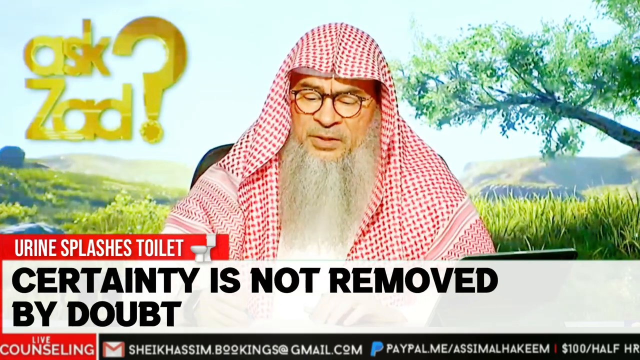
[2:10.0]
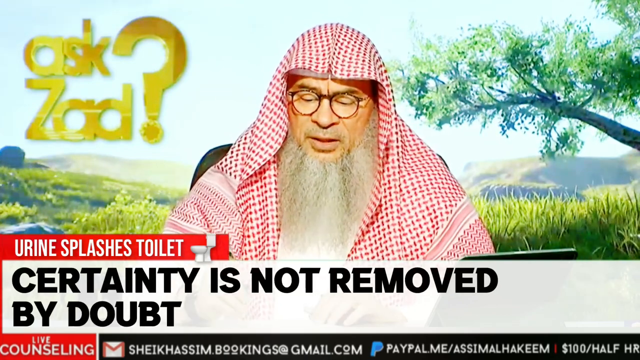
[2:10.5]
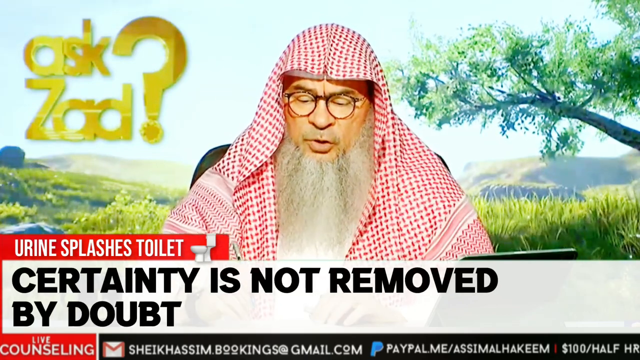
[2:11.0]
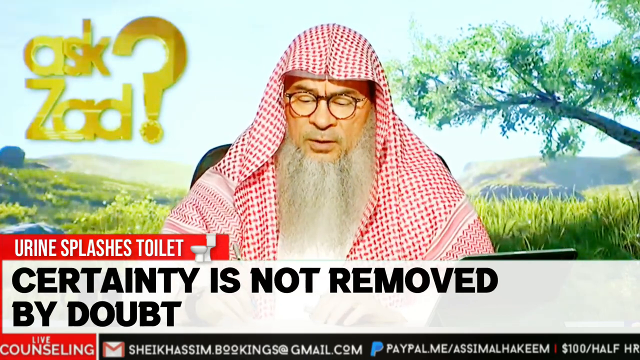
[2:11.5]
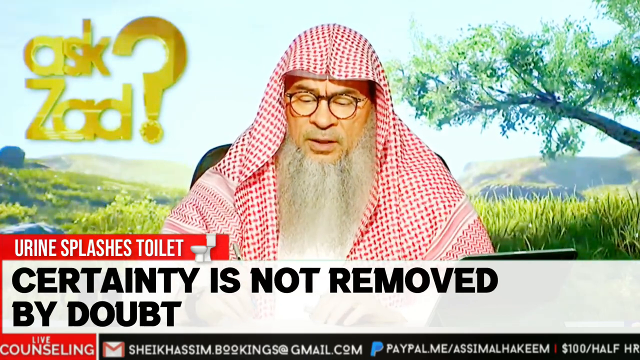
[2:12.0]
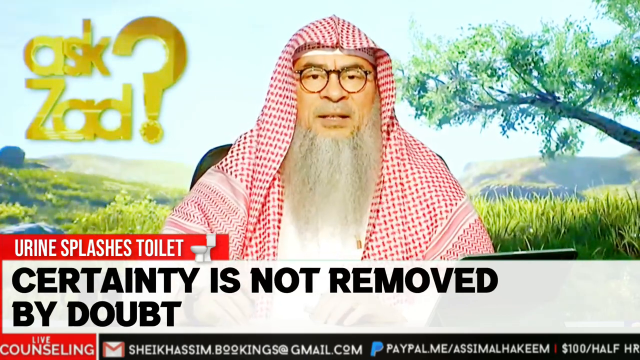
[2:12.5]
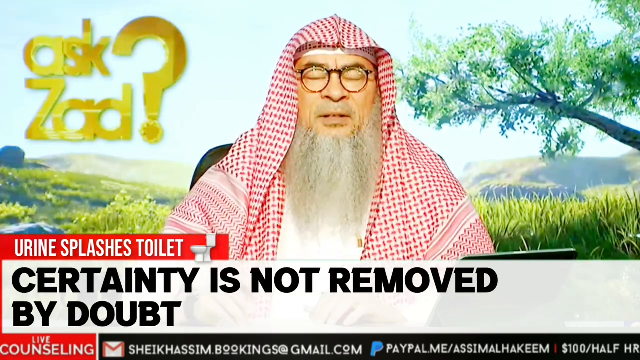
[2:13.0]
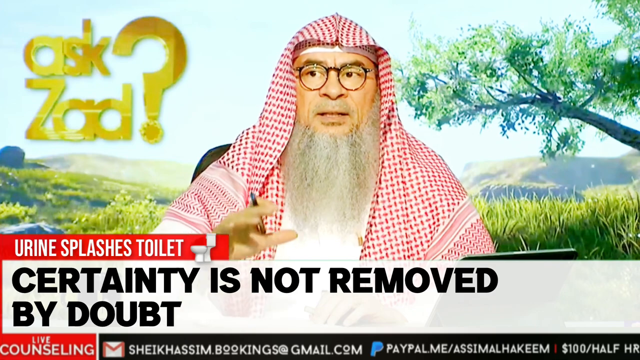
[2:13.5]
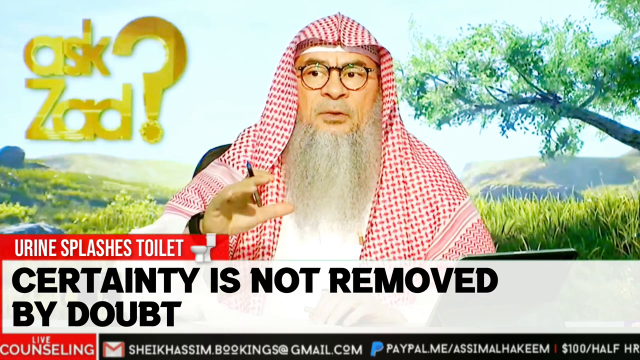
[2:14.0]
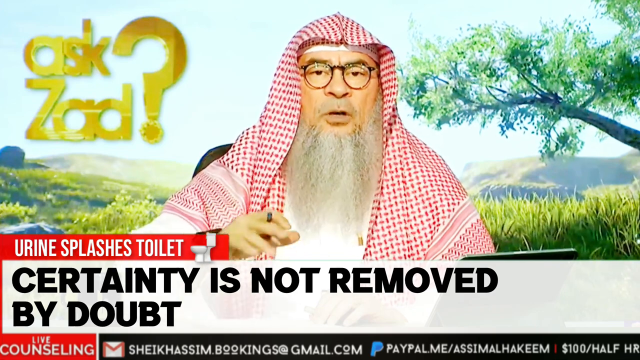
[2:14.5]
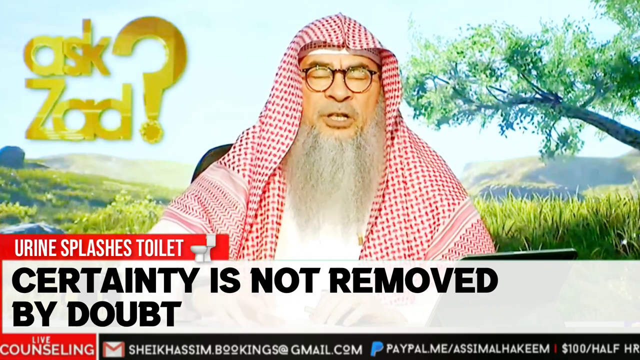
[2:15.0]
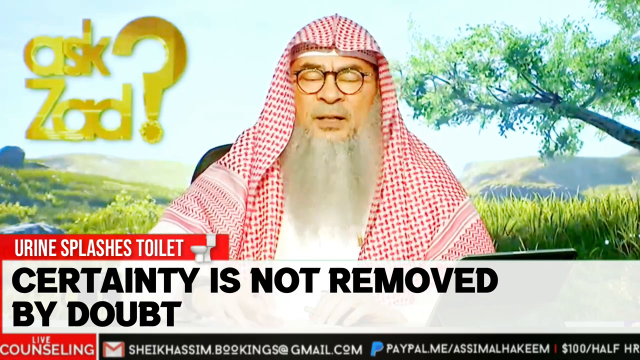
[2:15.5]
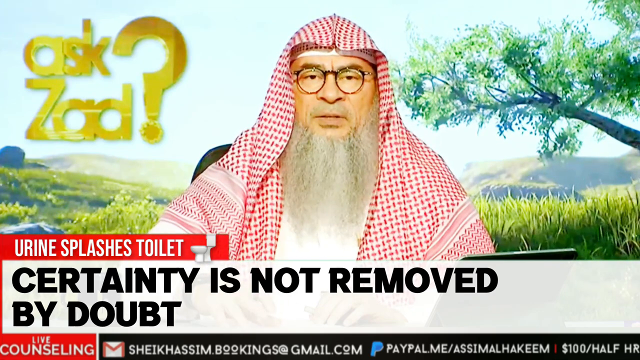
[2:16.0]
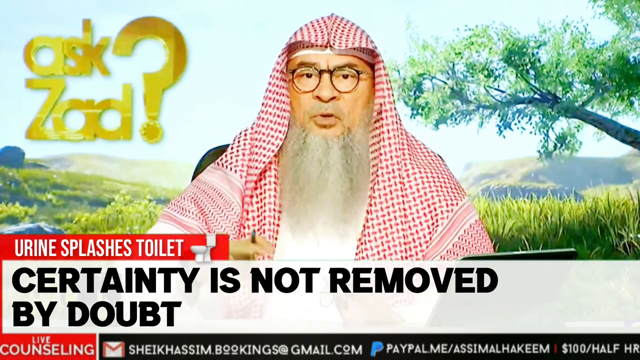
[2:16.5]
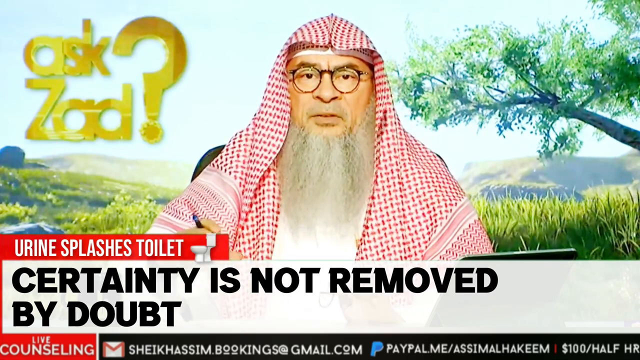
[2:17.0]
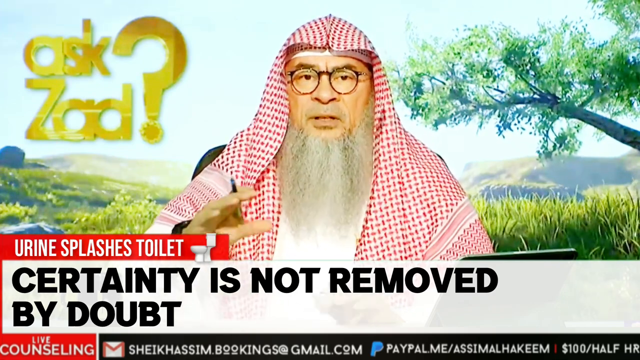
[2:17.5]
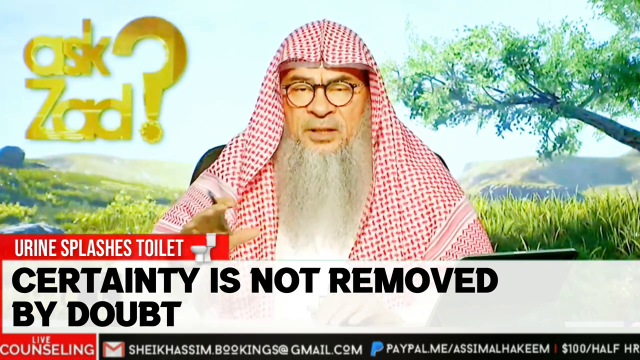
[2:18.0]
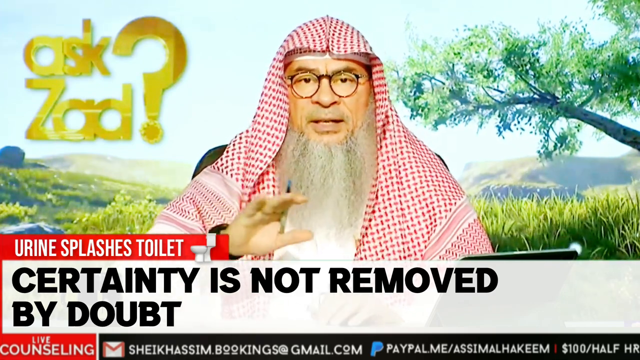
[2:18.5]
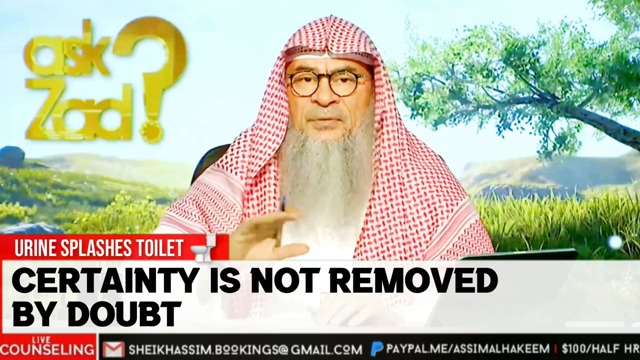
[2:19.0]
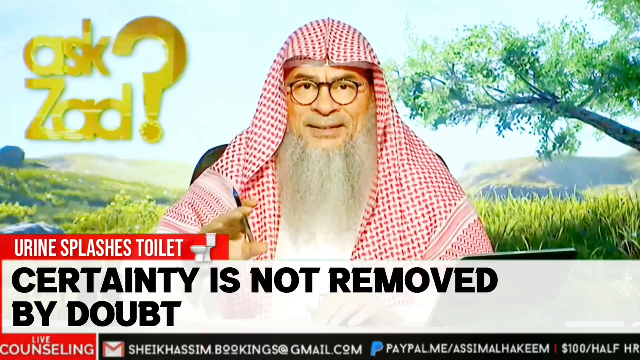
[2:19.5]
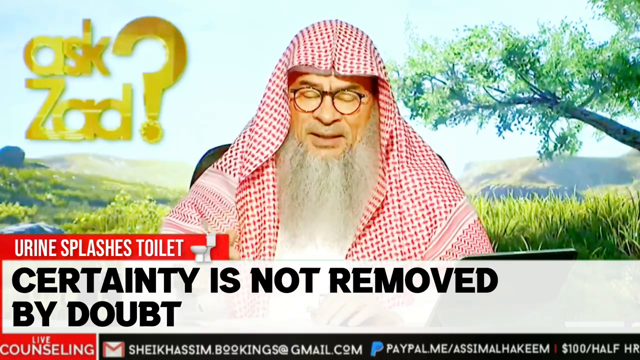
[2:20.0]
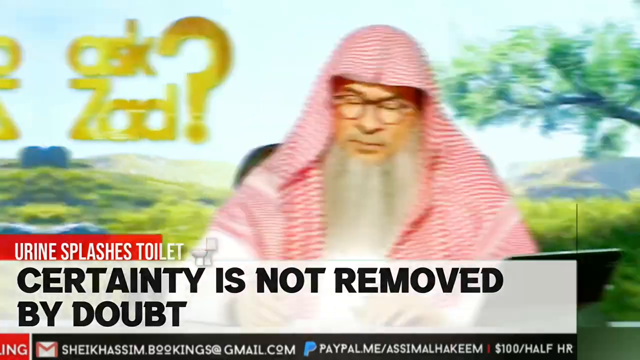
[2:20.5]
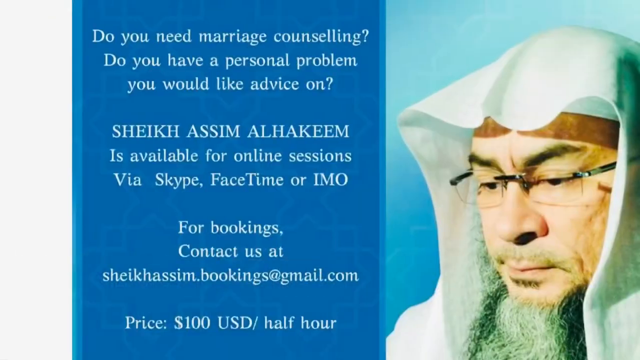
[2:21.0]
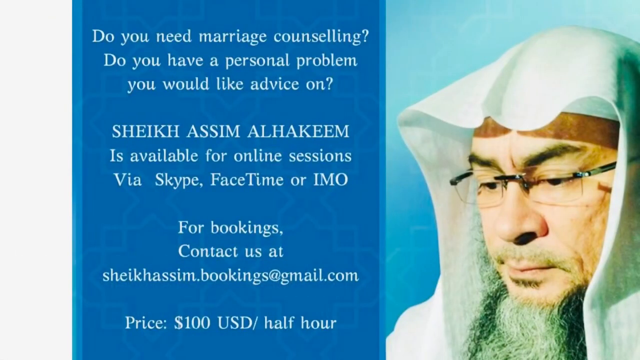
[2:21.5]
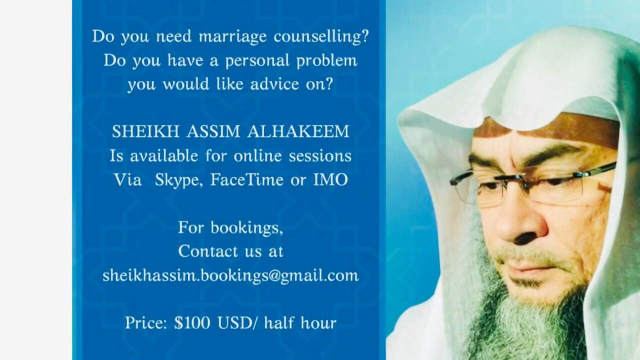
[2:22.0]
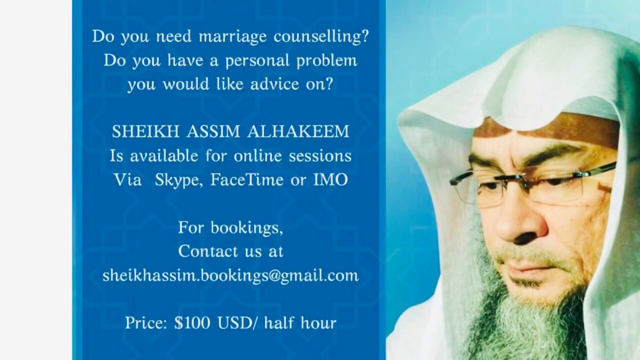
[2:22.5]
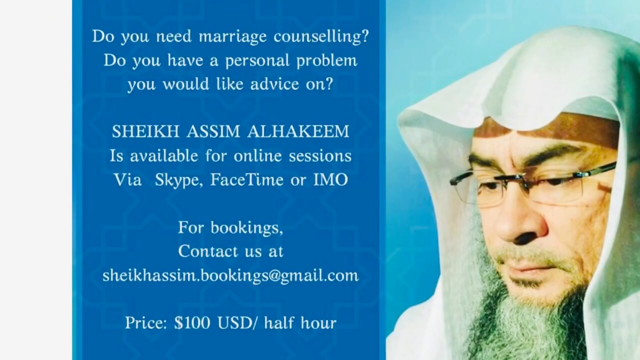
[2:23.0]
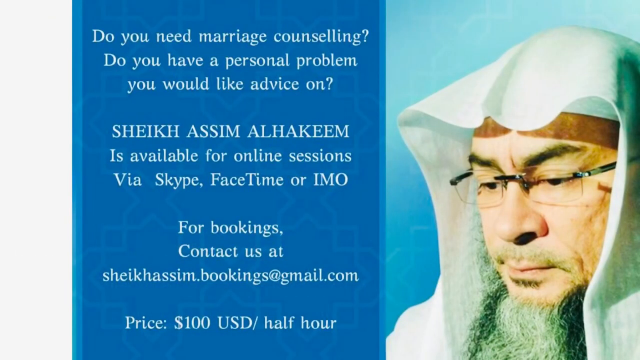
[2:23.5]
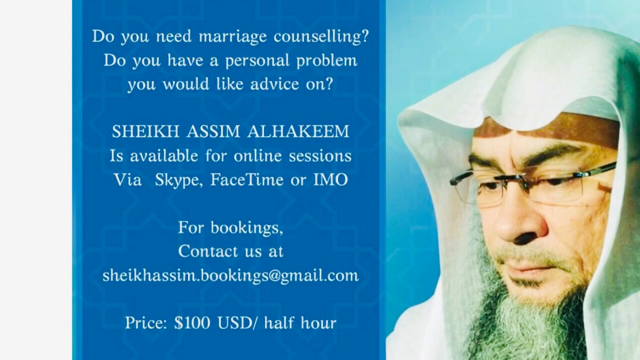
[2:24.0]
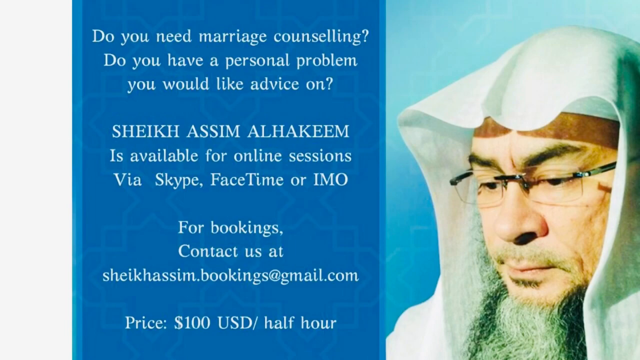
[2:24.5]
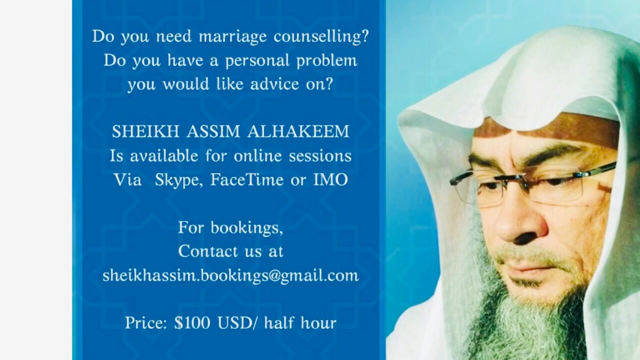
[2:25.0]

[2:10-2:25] The Sheik has the pen with the cap off in his right hand, says something, and appears to start writing. The screen then slides to a slide. On the right side is a picture of the Sheik looking down at an angle, wearing rimless glasses, with furrowed brows that make him look pensive, wearing just the white head covering against a light blue background. The left side has a blue background with some type of pattern and white text reading "do you need marriage counseling, do you have a personal problem you would like advice on, sheik Asim Al-Kahim is available for online sessions via Skype, FaceTime," followed by booking and contact information, his email, and the rate of $100 USD for a half hour. His name is in all capitals.